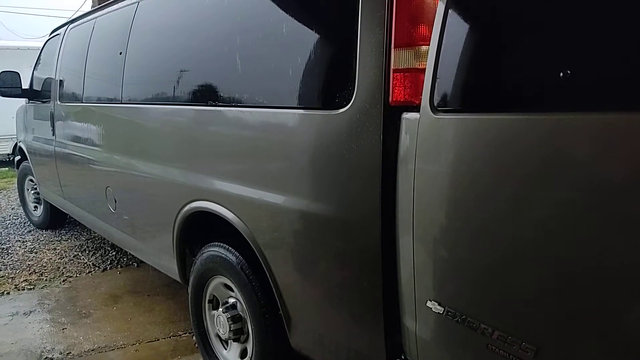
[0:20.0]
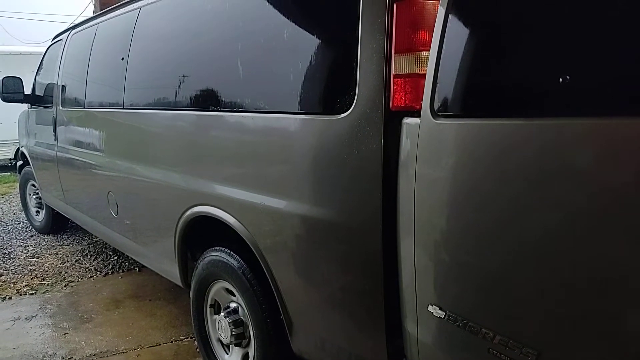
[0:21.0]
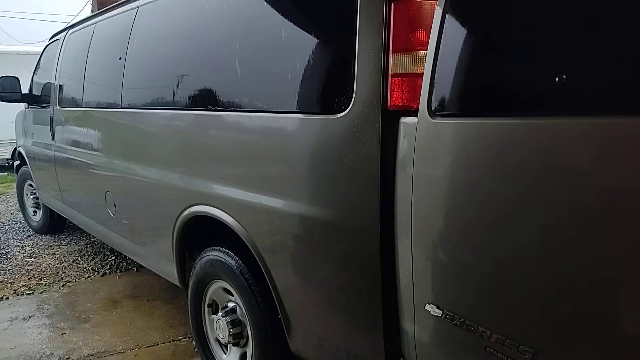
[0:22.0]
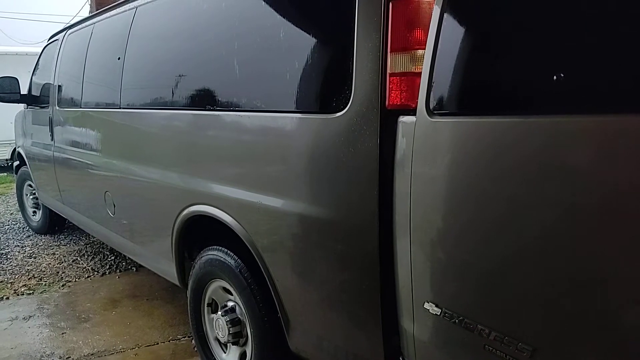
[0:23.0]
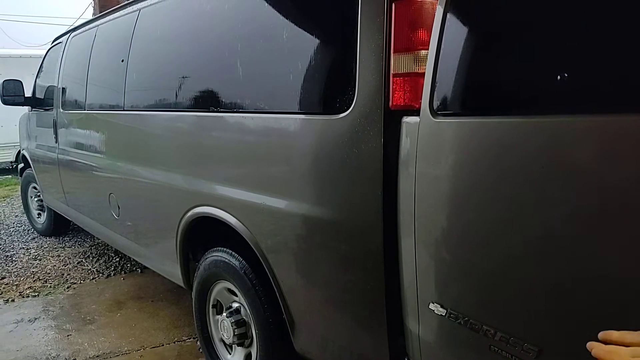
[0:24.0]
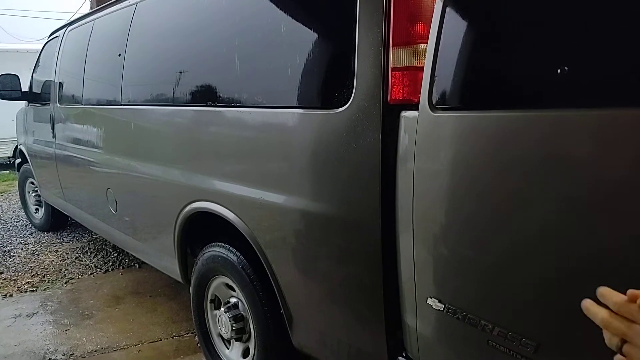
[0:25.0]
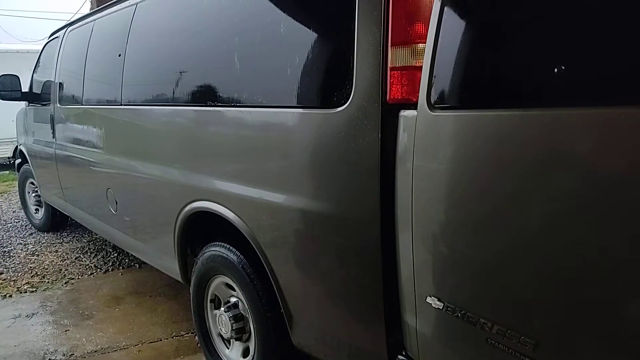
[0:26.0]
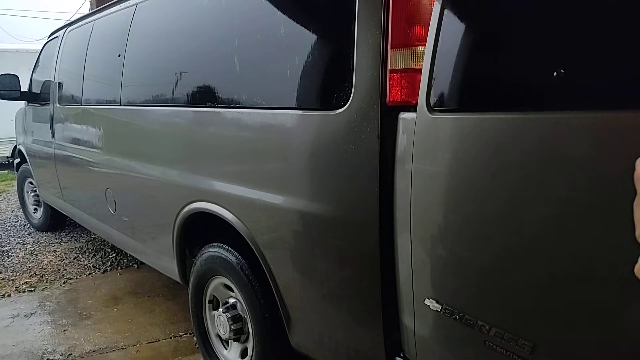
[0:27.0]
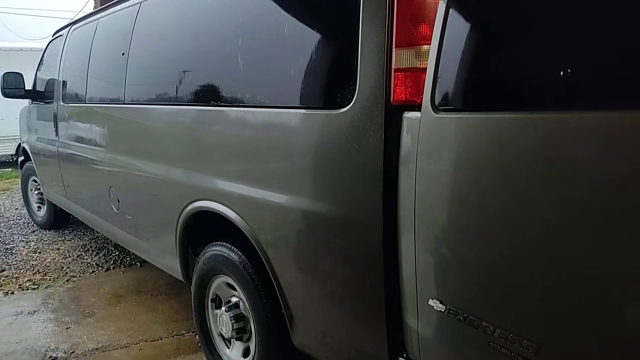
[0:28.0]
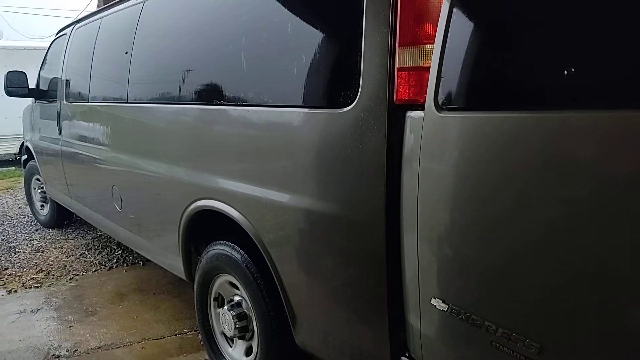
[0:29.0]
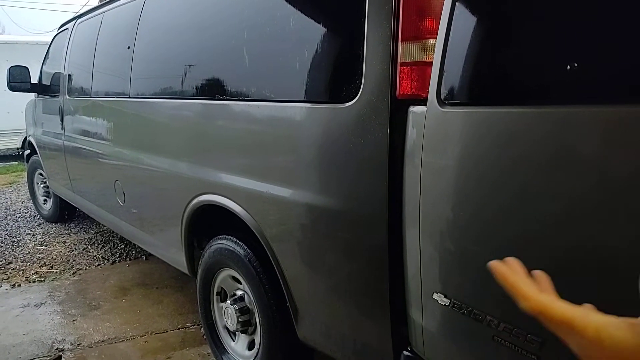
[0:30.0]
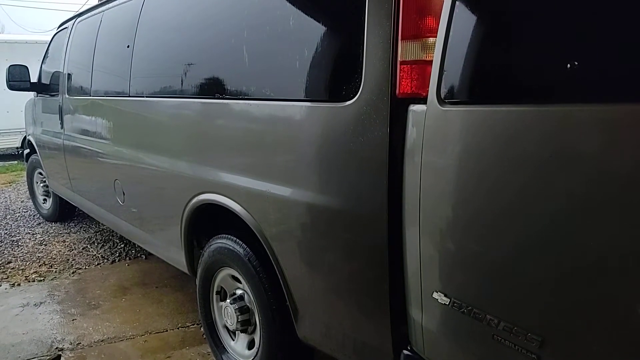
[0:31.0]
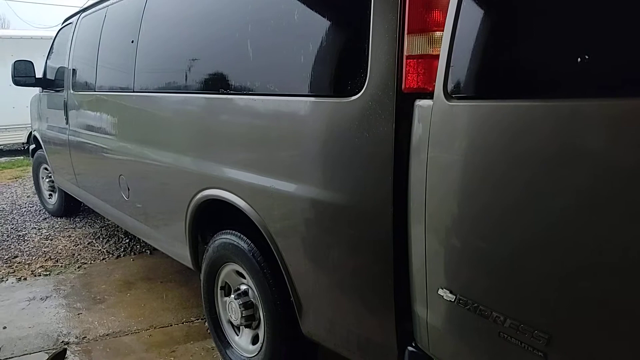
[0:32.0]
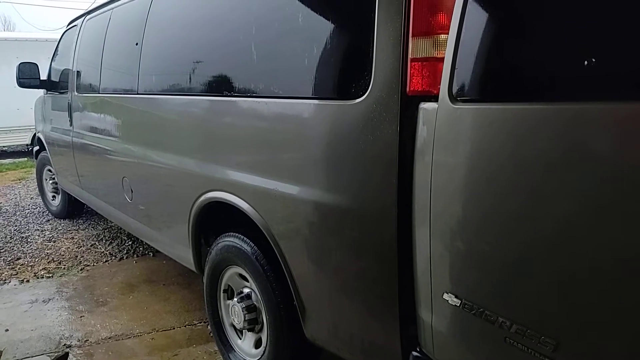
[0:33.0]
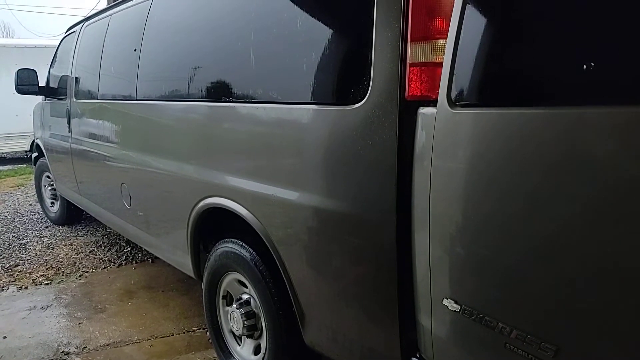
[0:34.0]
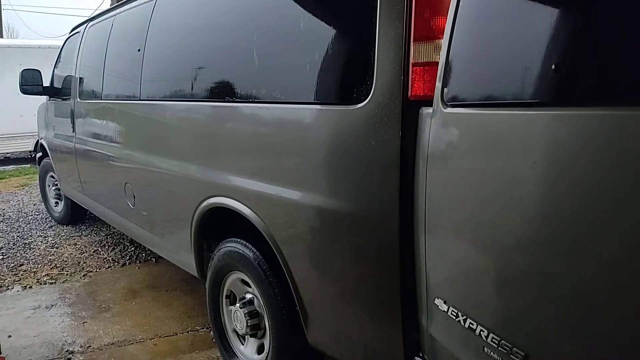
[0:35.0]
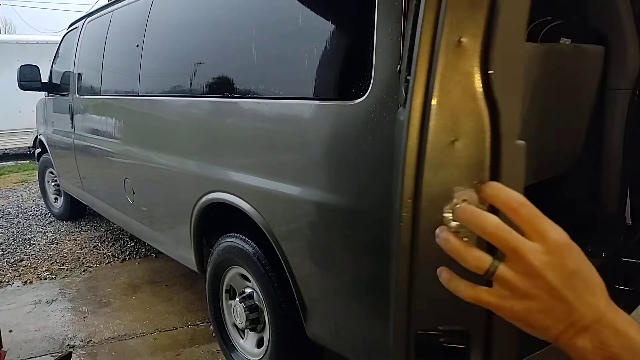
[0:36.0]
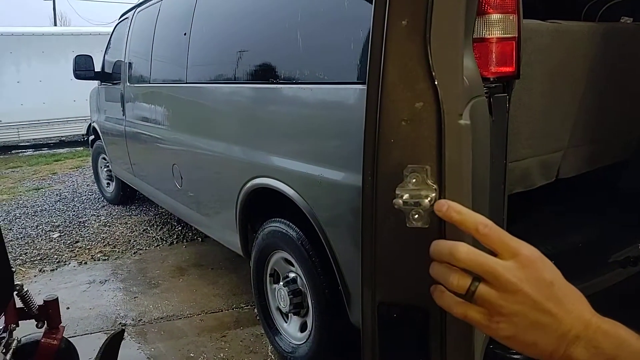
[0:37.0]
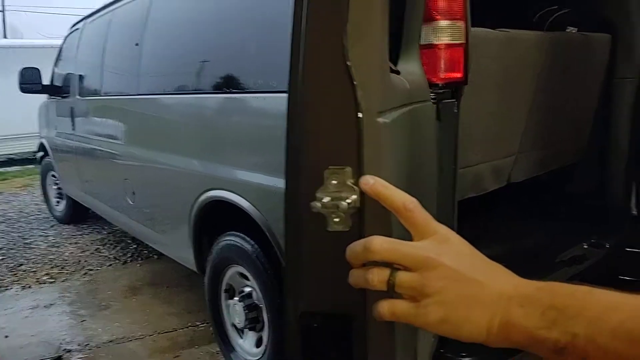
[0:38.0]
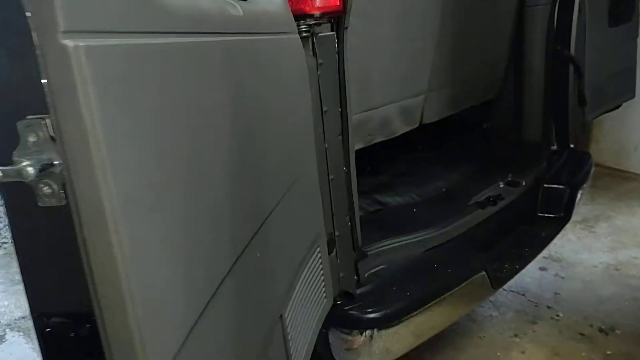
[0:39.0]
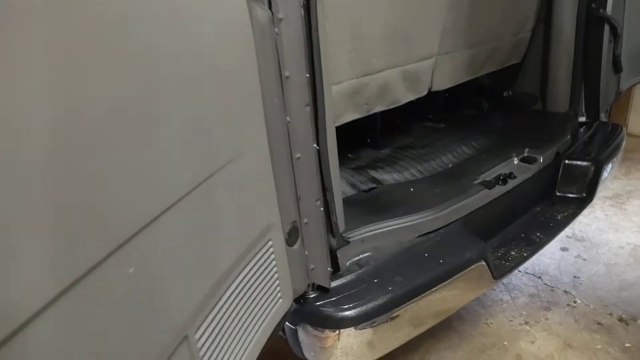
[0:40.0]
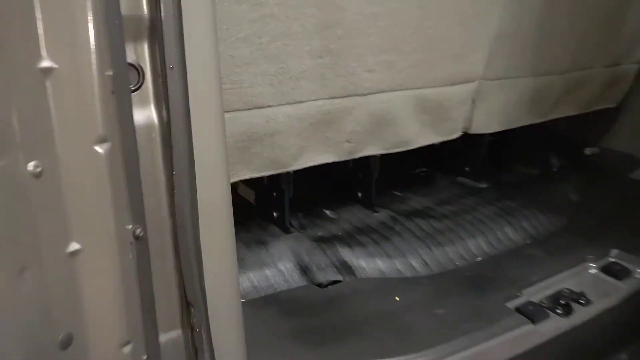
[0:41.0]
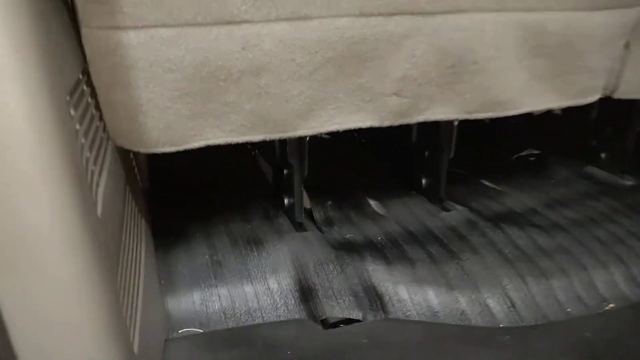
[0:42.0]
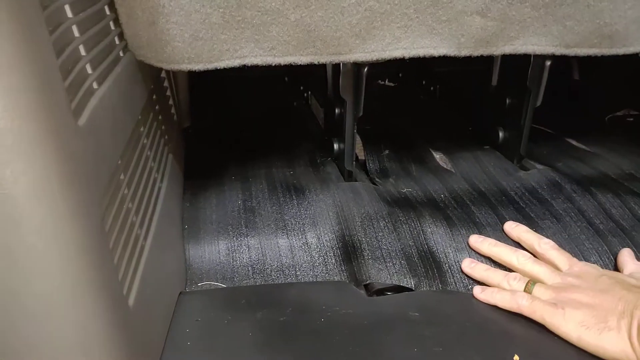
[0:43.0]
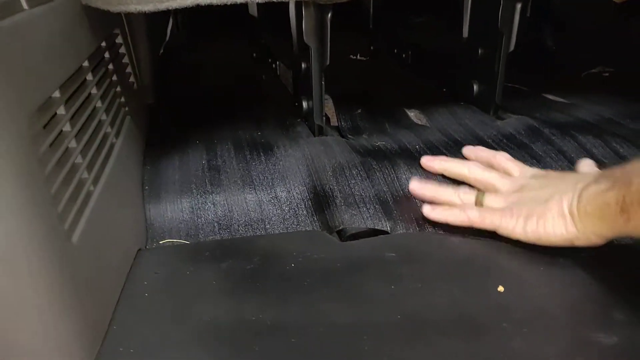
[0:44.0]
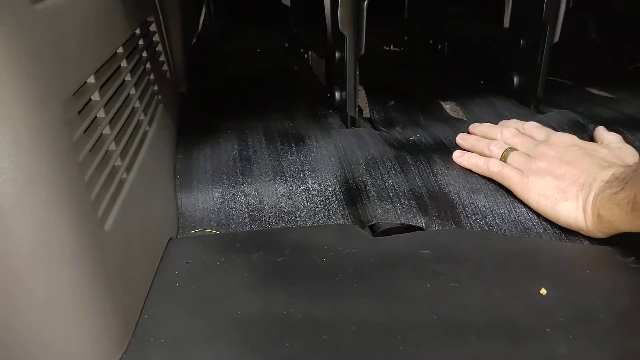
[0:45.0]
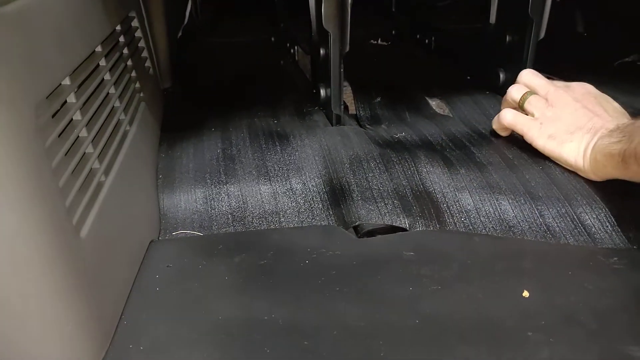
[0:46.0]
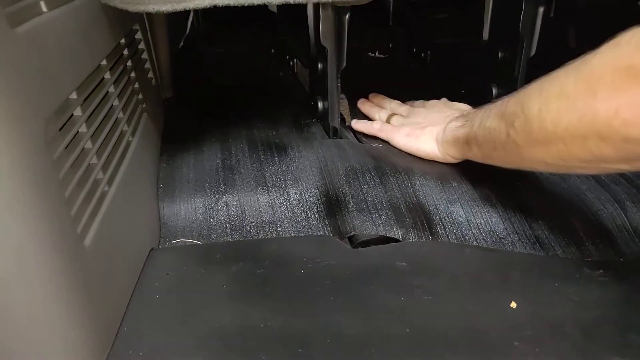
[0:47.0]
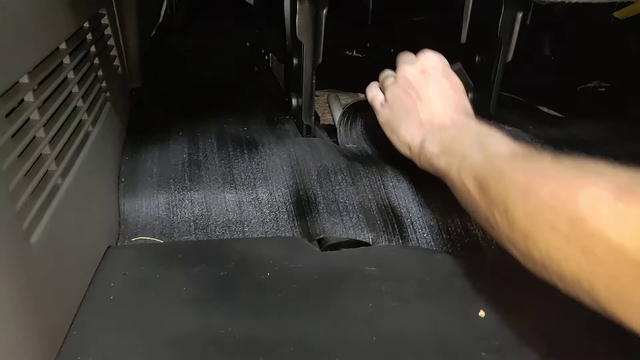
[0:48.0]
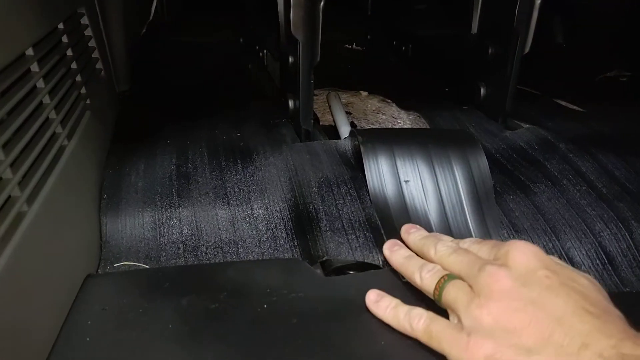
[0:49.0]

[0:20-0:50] The view of the left-hand side of the grey minivan and its left-hand rear door continues. The hands keep moving as the person presumably continues to talk about the vehicle. The person's left hand moves towards the door and opens it fully, first pointing at a locking mechanism in the door. The camera then shifts perspective to look inside the vehicle, under the rear row of seats. The person places their left hand, fingers splayed out, on the black mat on the floor of the vehicle and points something out about that area; the hand wears a gold-coloured ring on the wedding ring finger. The person pulls back a strip of matting below the central seat and points to a tube or strip of metal in the floor.